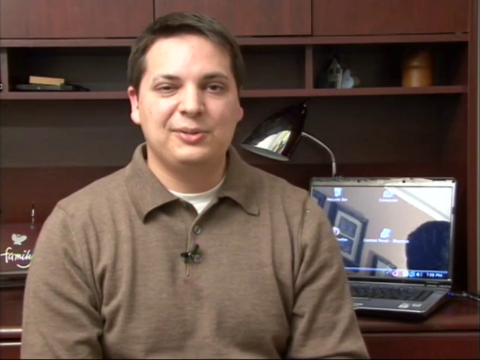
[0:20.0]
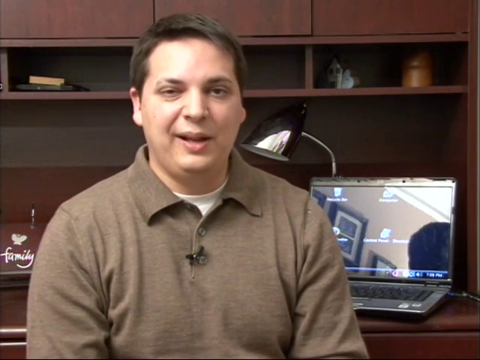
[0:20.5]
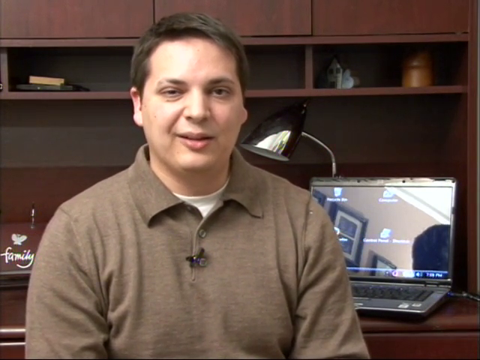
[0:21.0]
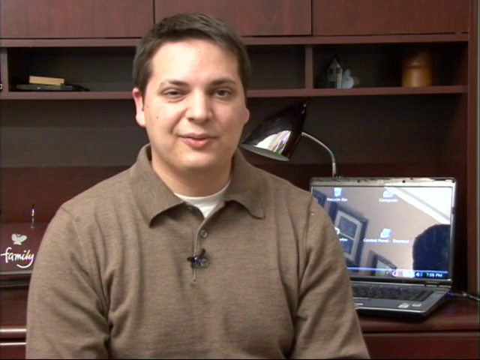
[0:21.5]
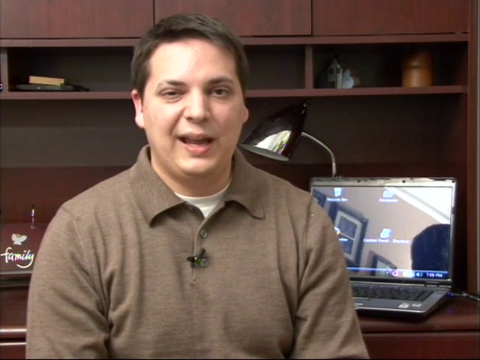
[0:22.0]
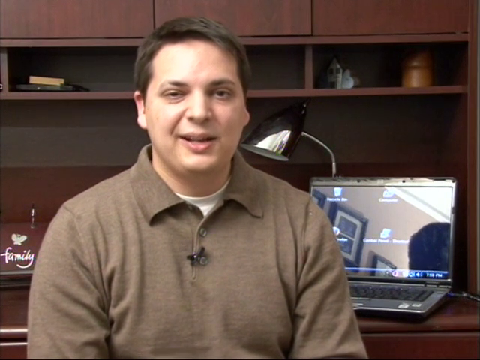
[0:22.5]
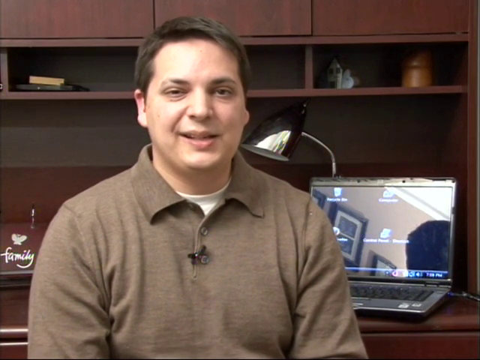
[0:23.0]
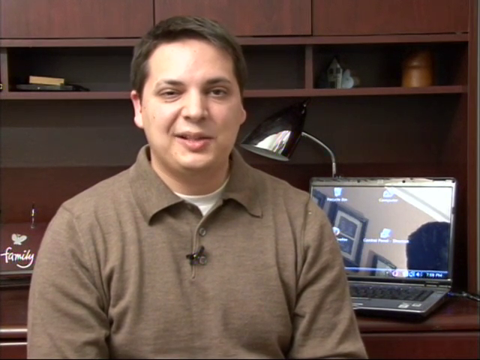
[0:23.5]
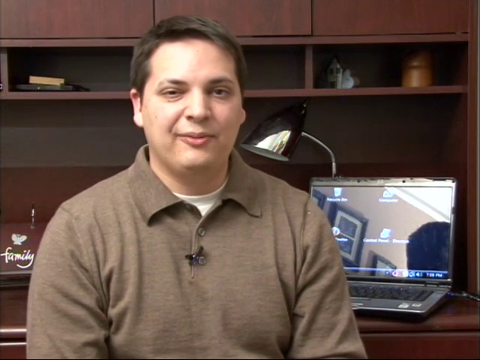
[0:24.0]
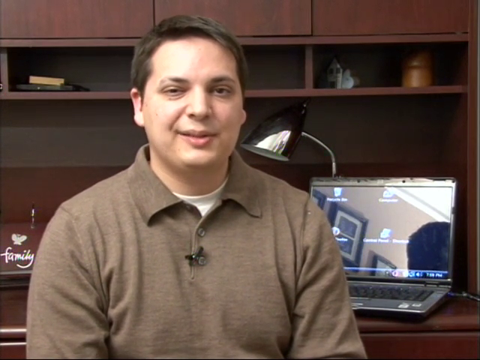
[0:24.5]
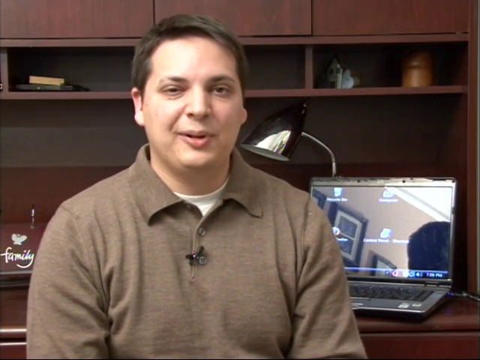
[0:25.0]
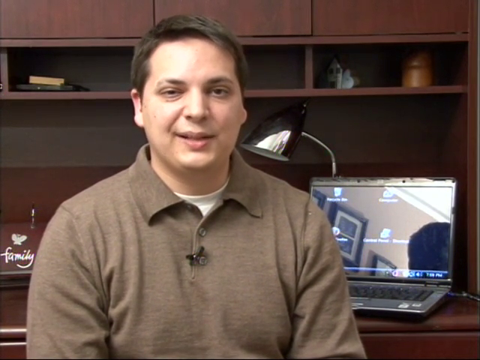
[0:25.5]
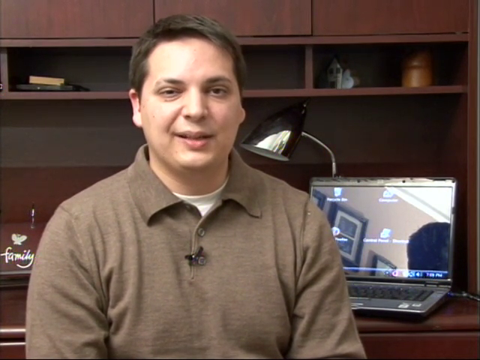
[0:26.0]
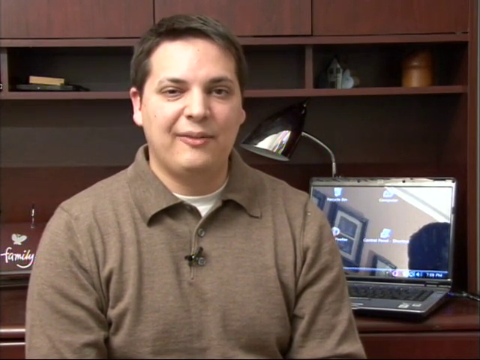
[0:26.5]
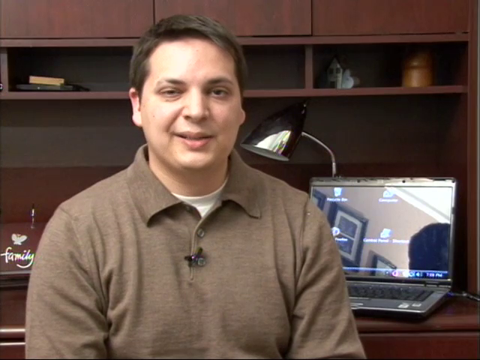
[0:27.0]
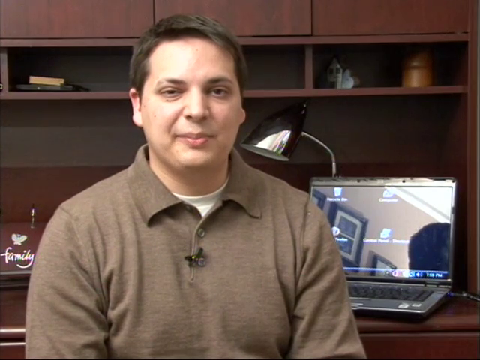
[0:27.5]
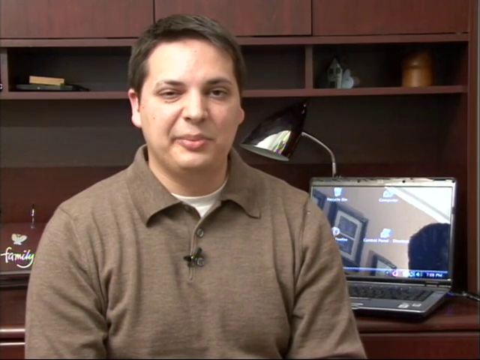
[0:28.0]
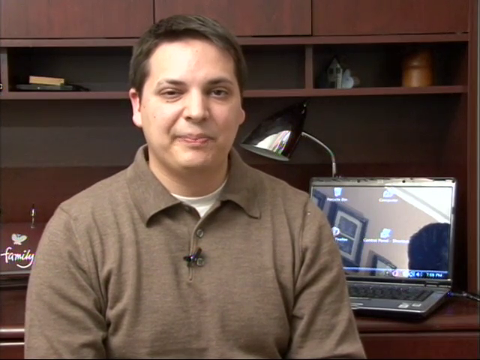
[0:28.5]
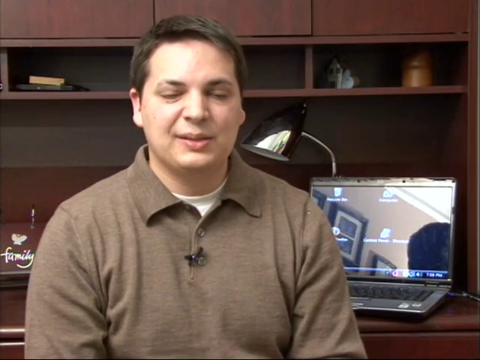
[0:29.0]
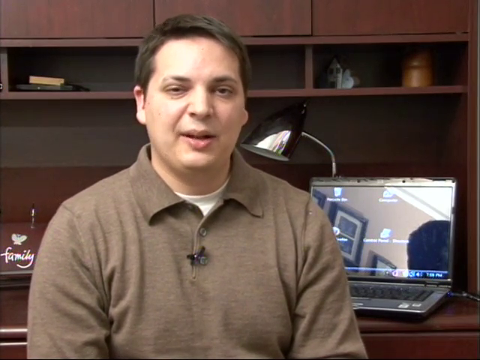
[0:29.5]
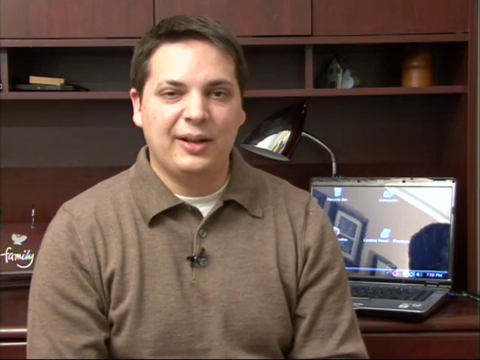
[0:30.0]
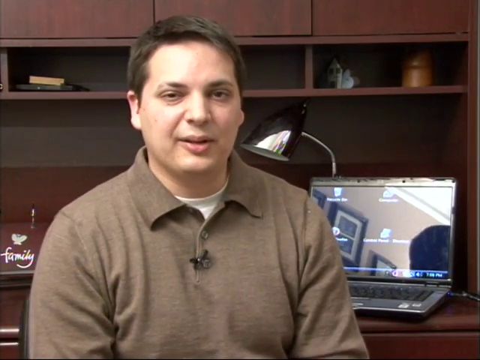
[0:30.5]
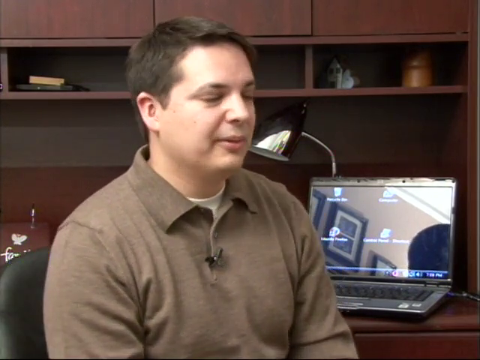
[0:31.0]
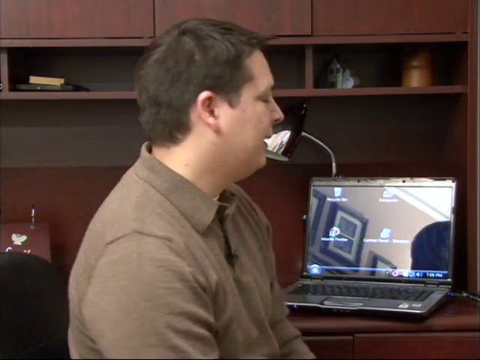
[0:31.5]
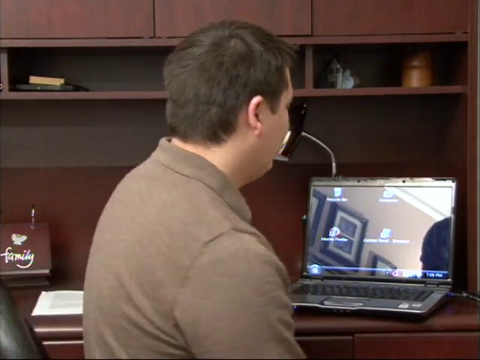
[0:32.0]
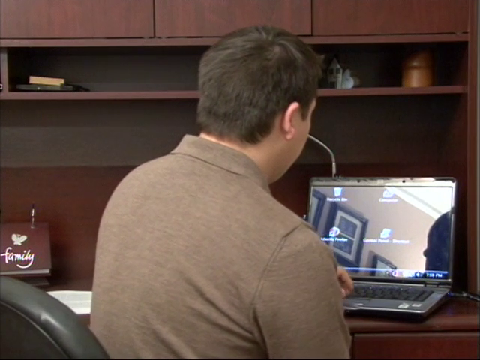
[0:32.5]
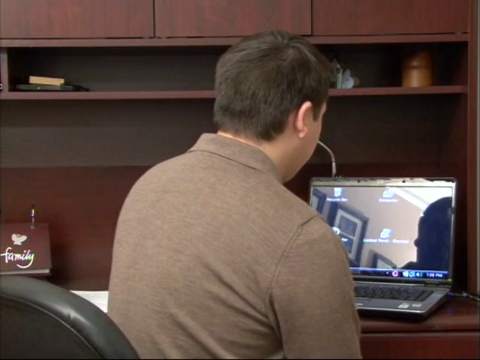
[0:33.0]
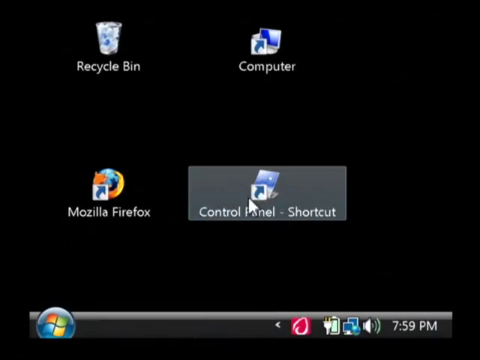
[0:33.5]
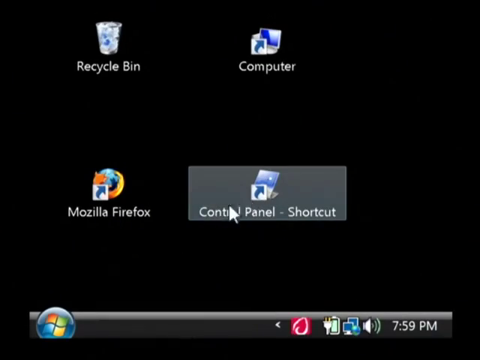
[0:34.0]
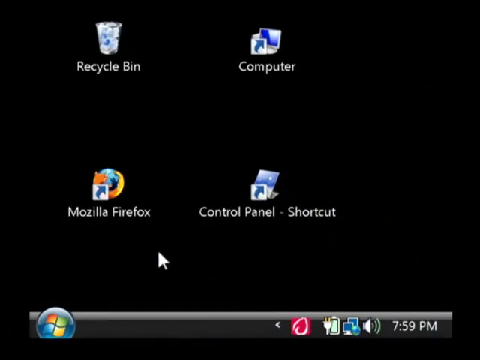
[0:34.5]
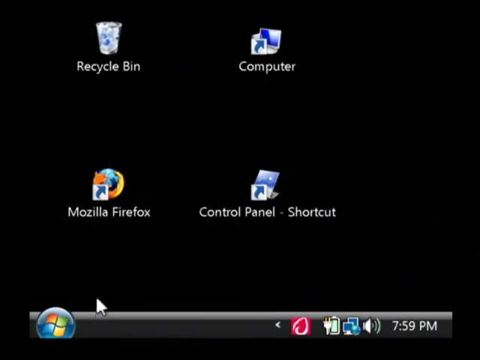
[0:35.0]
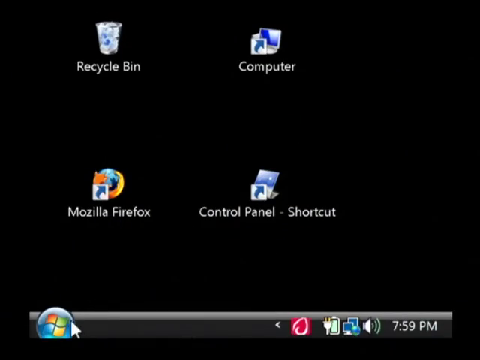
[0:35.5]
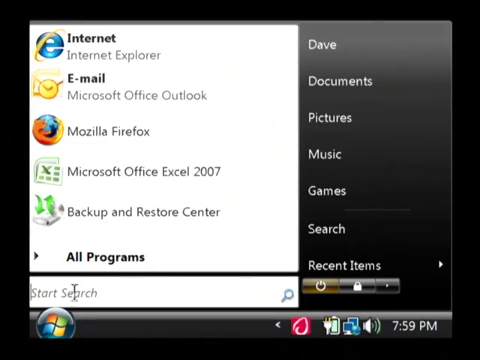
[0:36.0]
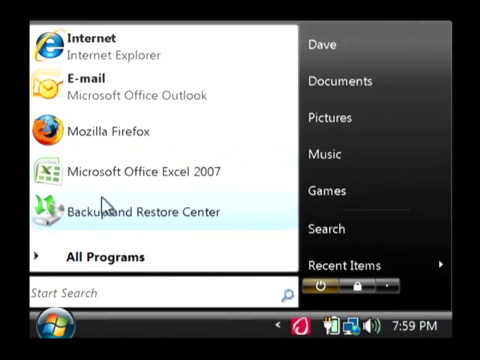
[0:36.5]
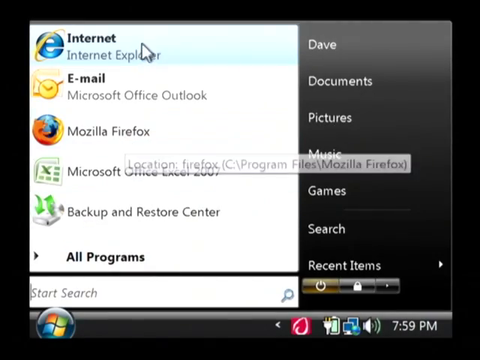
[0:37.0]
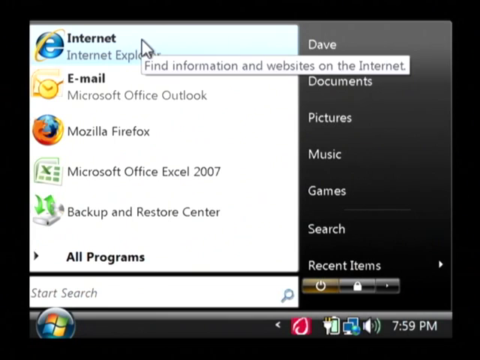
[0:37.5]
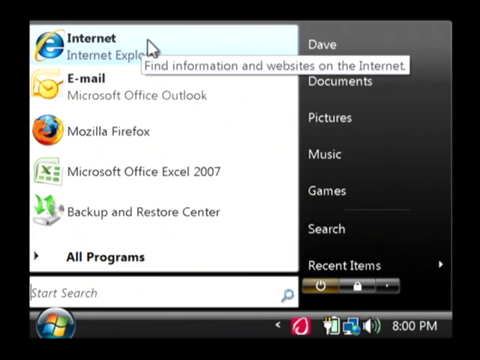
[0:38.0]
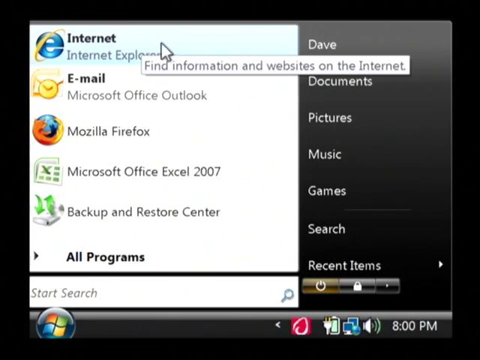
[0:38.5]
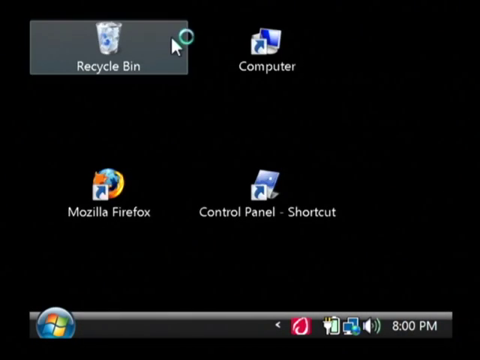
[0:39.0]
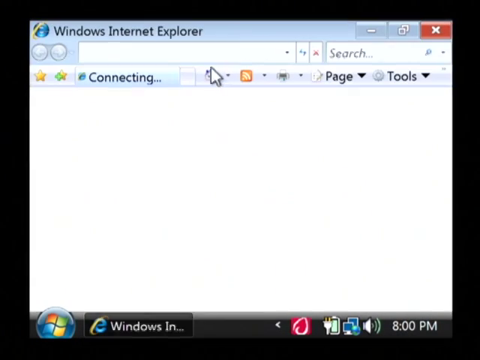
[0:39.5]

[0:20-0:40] The presenter continues talking for quite a while, then turns around to look at his computer again. The video cuts from the person straight to the computer screen. The screen appears zoomed in, or its resolution is very small, so everything looks scrunched. He clicks on the Windows desktop, clicks the Start button, and clicks on Internet Explorer. The operating system is an old version of Windows, possibly Windows Vista or Windows 7. The man appears to be doing some type of technical training.